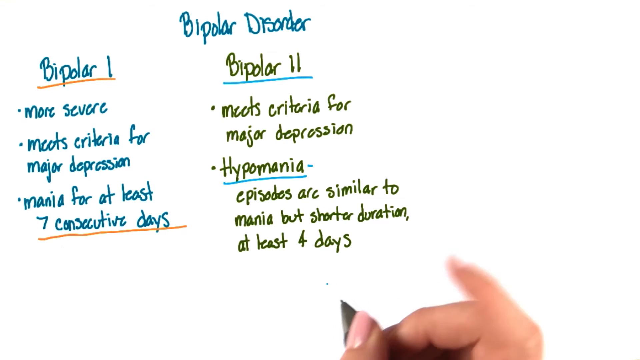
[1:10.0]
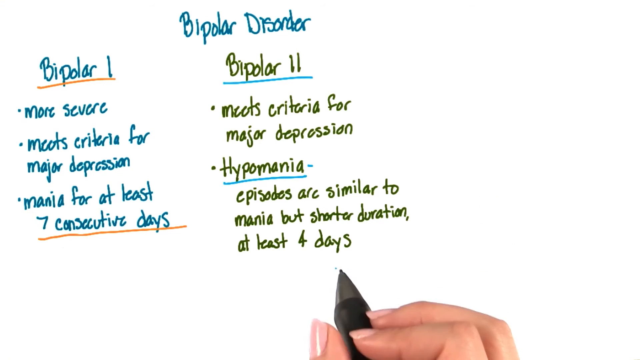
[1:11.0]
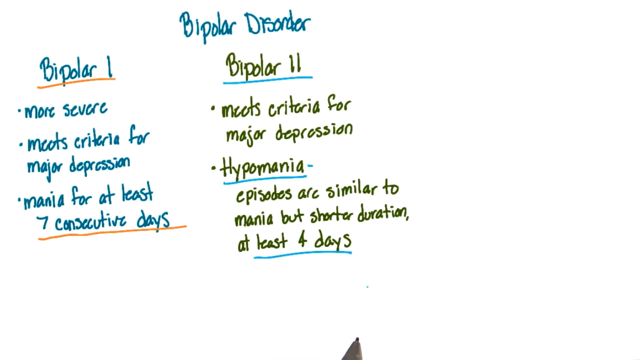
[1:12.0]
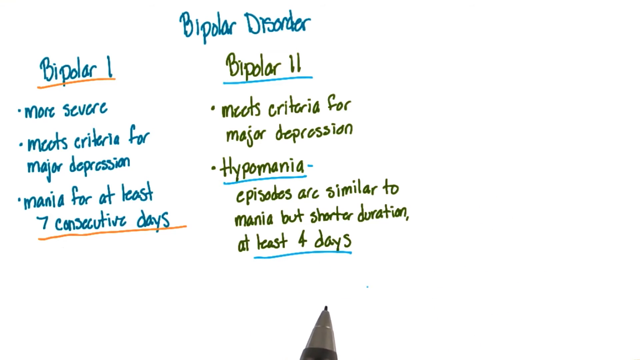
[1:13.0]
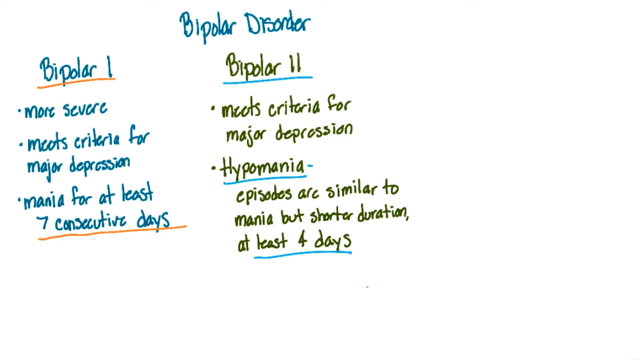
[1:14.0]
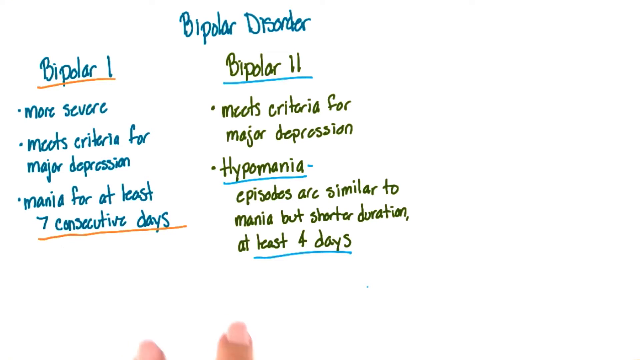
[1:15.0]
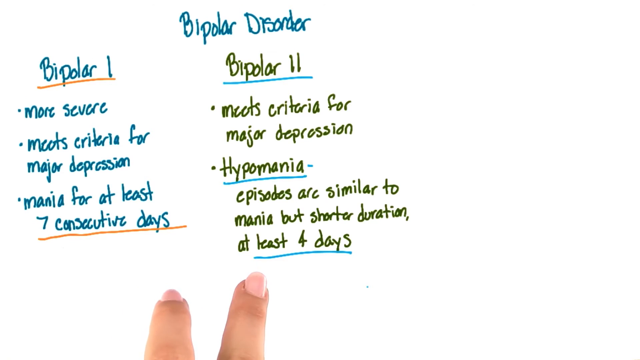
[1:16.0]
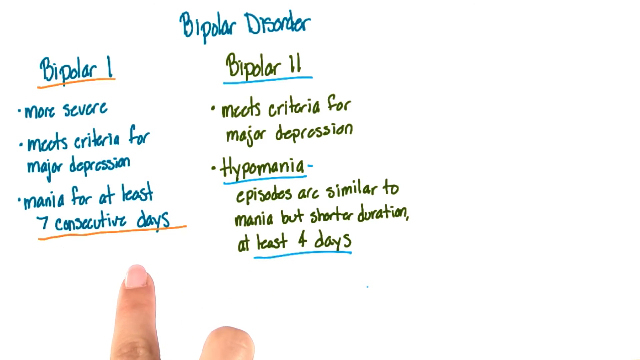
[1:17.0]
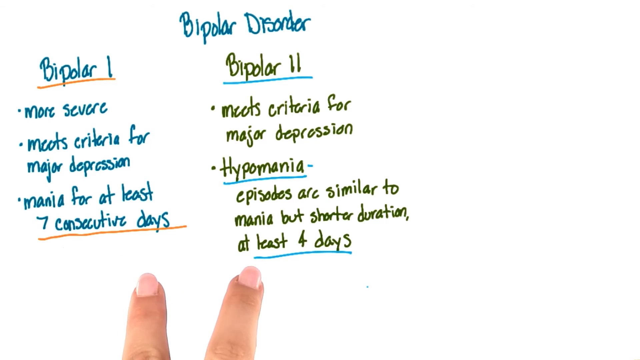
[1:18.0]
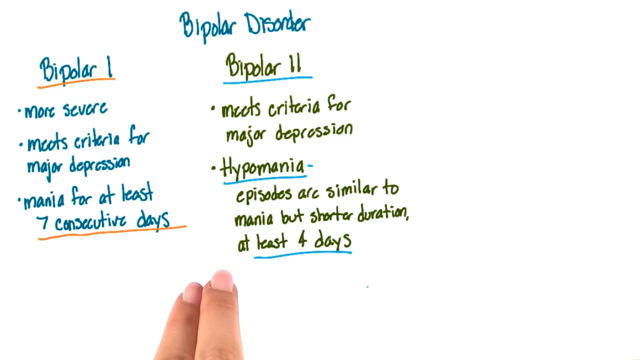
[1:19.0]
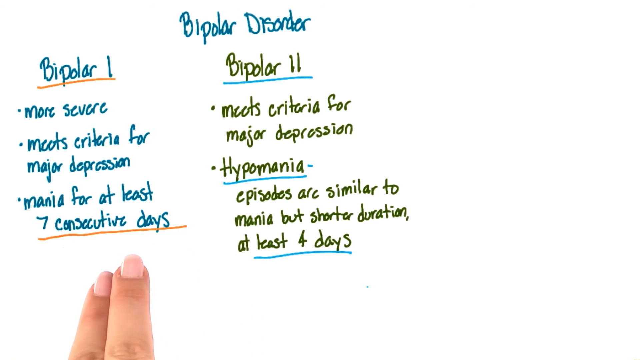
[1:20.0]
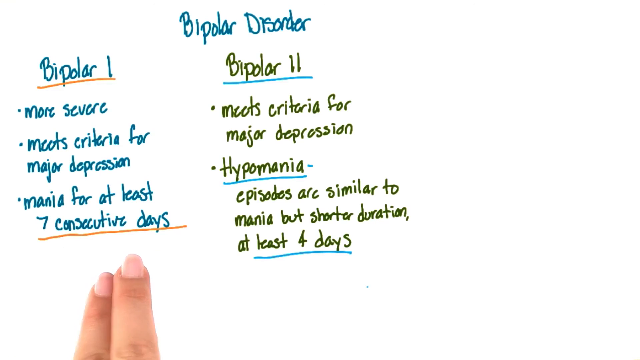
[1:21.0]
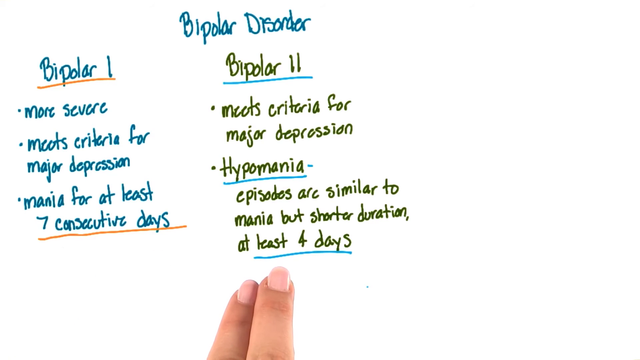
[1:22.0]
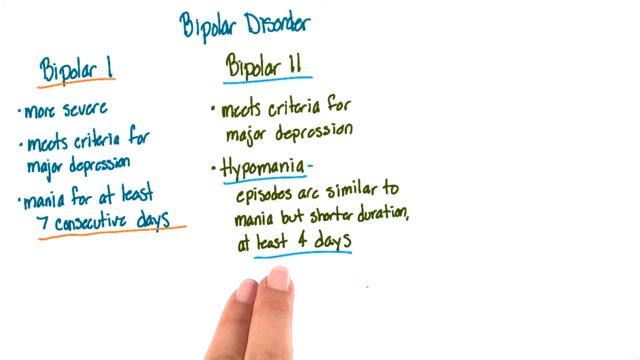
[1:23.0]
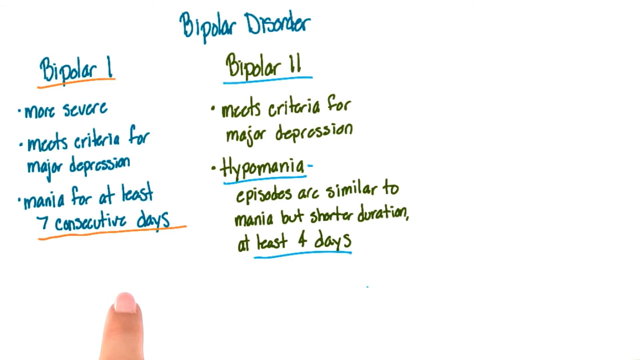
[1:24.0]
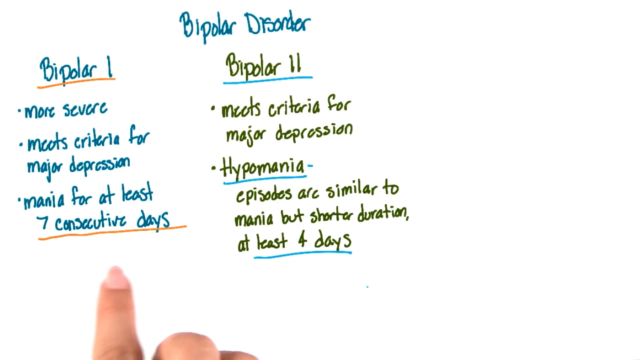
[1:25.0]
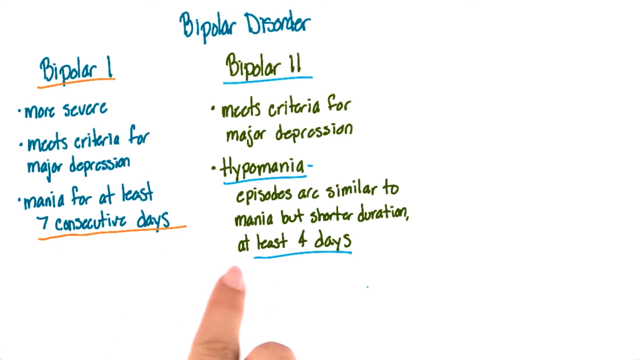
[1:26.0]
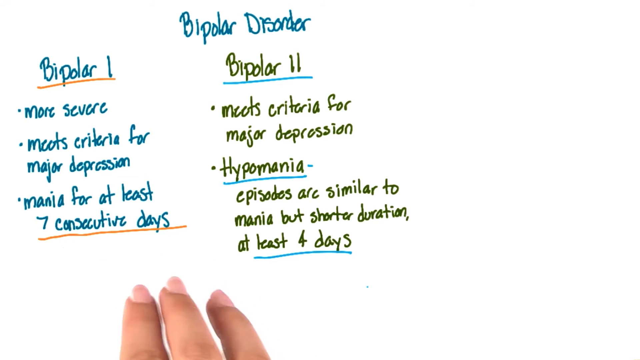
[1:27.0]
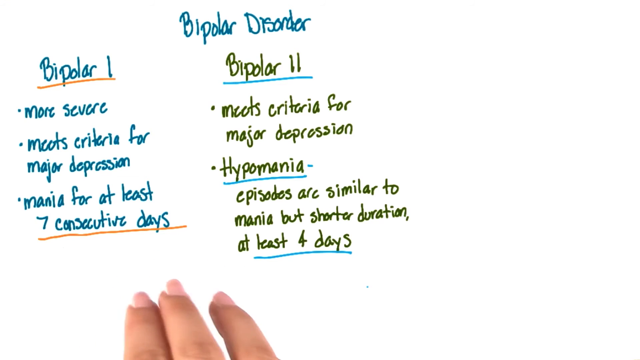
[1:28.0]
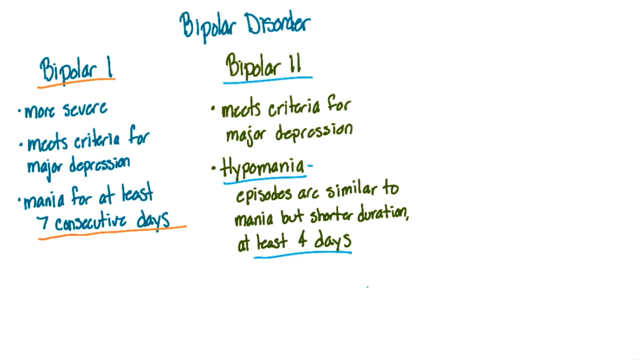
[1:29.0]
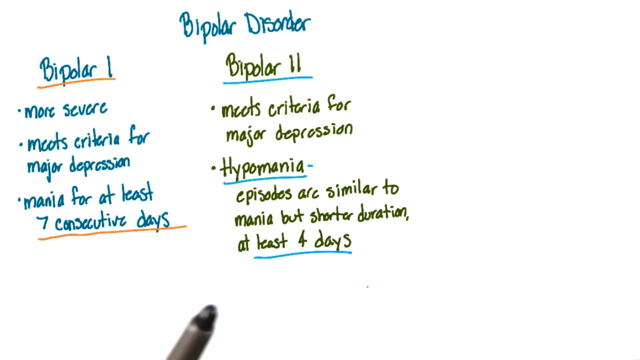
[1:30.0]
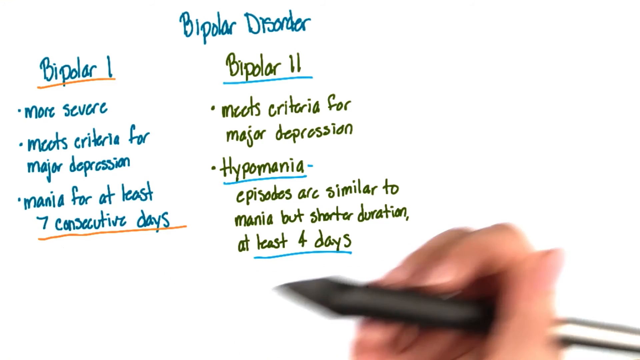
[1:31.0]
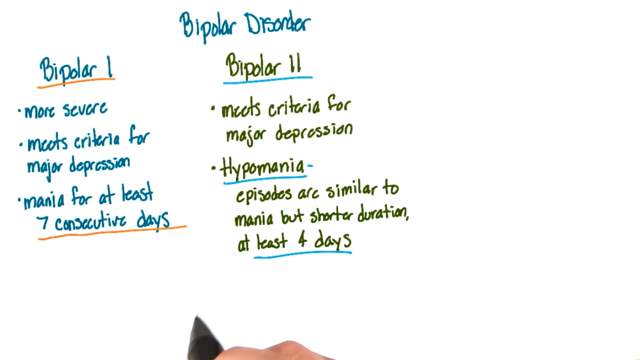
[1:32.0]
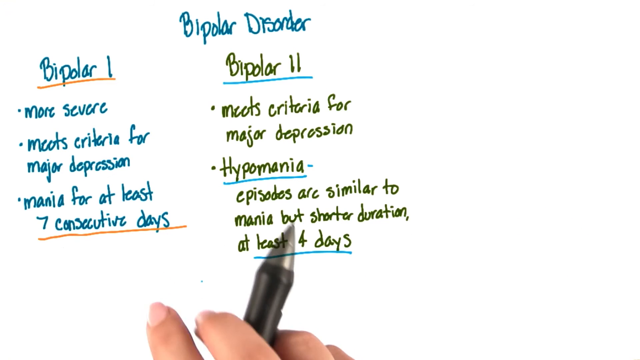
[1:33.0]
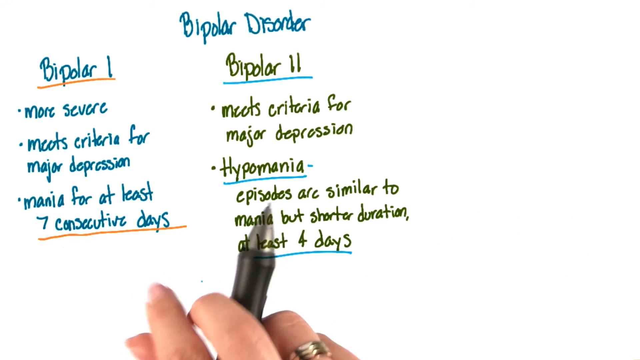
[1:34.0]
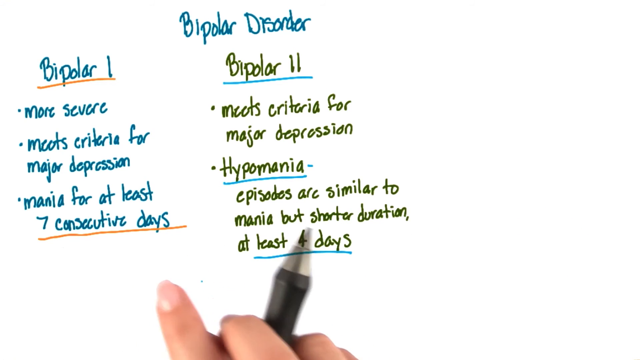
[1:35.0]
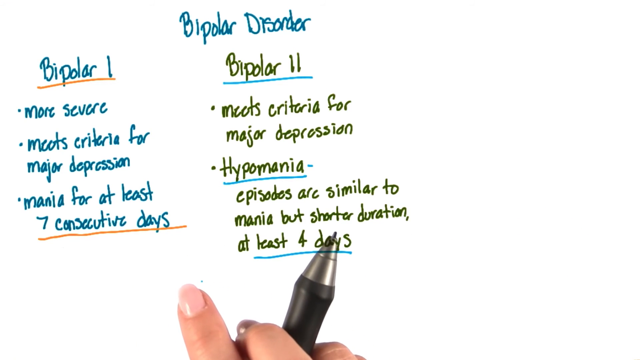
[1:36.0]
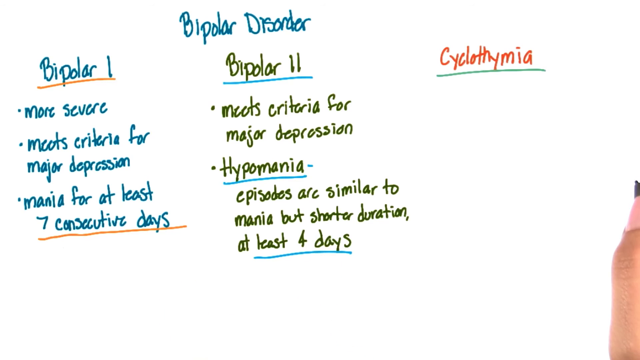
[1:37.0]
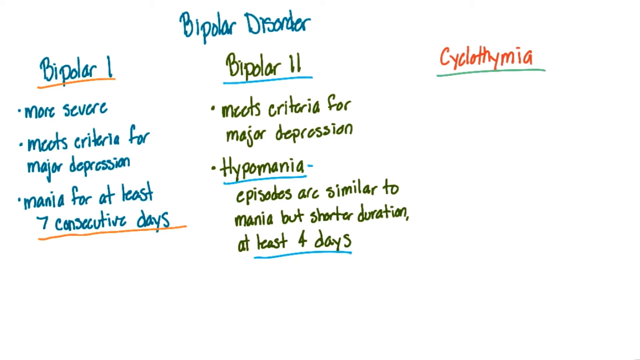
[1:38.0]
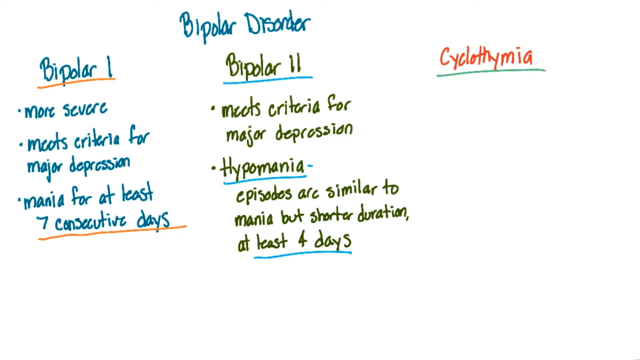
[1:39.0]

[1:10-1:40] Multiple lines of handwritten text are on a white background, and someone holds a digital pen to it, pointing with the index finger toward one of the columns of text while holding the pen with the side of the middle finger and the tip of the thumb. The text reads "bipolar disorder. Bipolar 1, more severe, meets criteria for major depression, mania for at least seven consecutive days. Bipolar 2, meets criteria for major depression, hypomania. Episodes are similar to mania but shorter duration, at least four days." The pen underlines "at least four days", points toward the word "days", and disappears off screen. The person then pulls in their left hand and points with the middle finger toward the bipolar 1 column and the index finger at the bipolar 2 column. They pull the index finger back and point at the bipolar 1 column with the middle finger, then the index finger points back at bipolar 2. They put two fingers together under bipolar 1 and move them to bipolar 2, then point with the middle finger toward bipolar 1. They wave the hand underneath the screen and point back and forth with the index finger. The digital pen reappears from the bottom of the screen, points toward the two columns of text and moves up and down. New text reading "cyclothymia" appears on the top right.